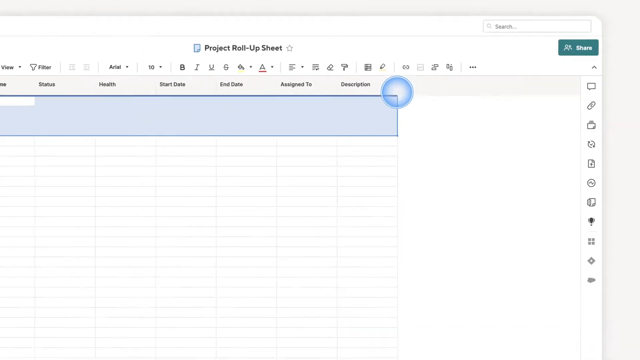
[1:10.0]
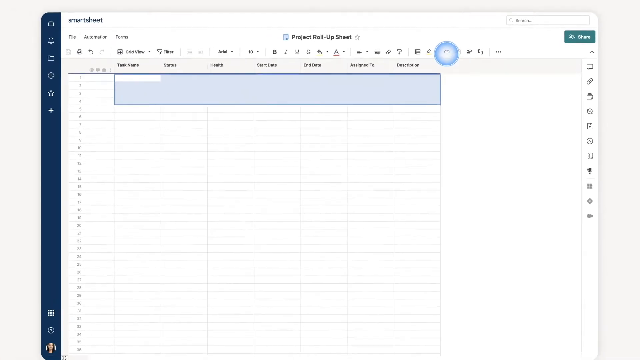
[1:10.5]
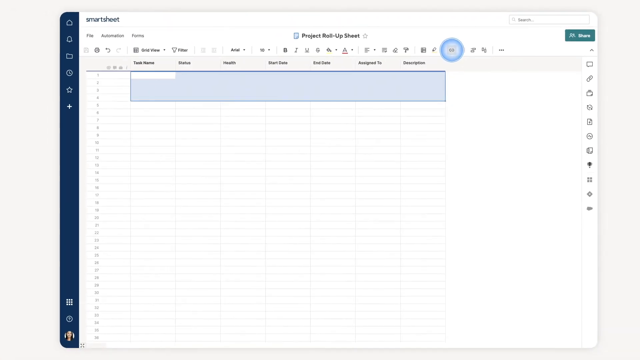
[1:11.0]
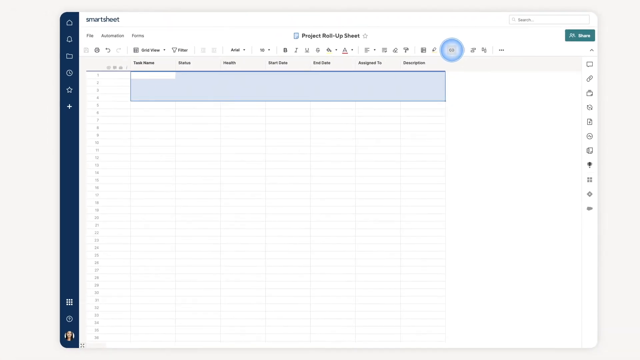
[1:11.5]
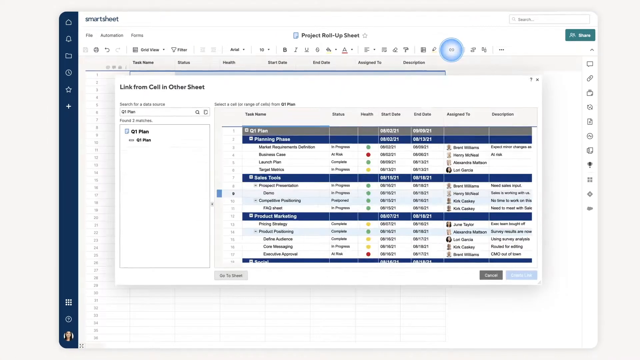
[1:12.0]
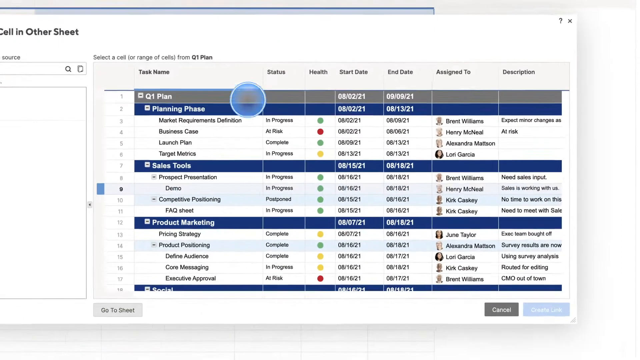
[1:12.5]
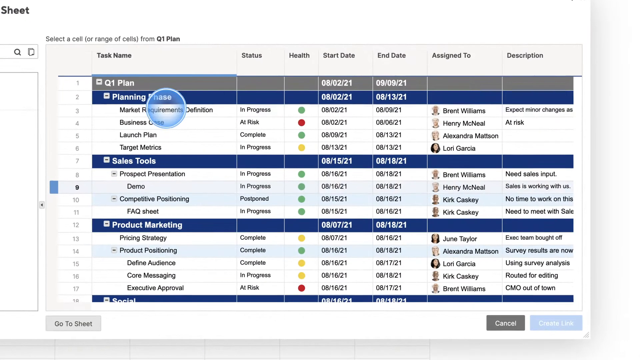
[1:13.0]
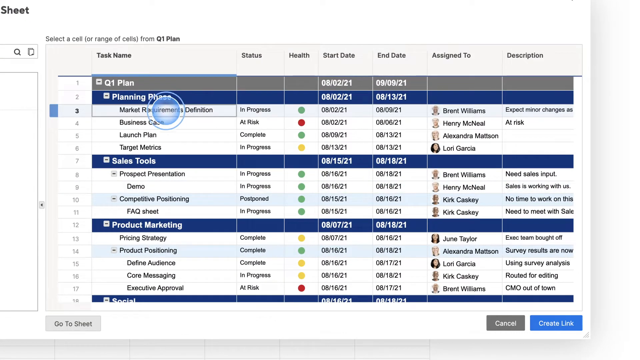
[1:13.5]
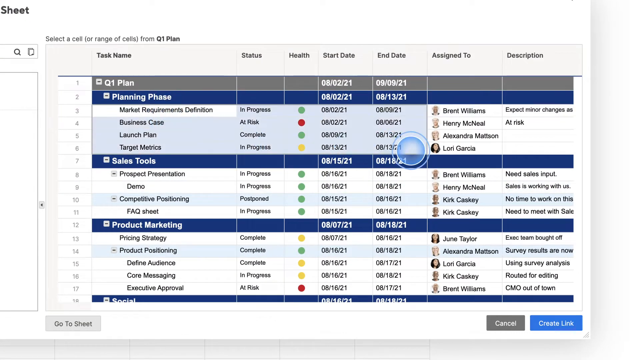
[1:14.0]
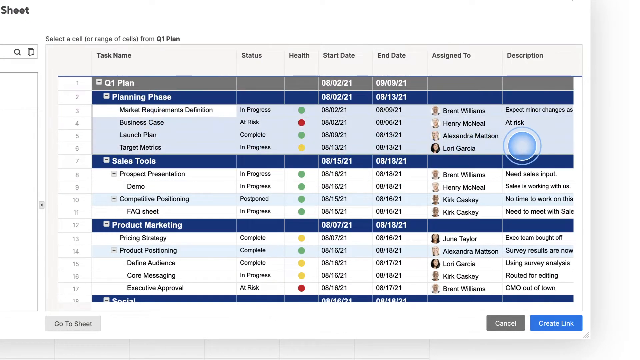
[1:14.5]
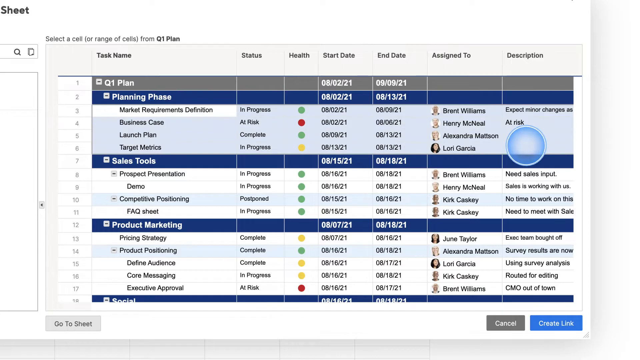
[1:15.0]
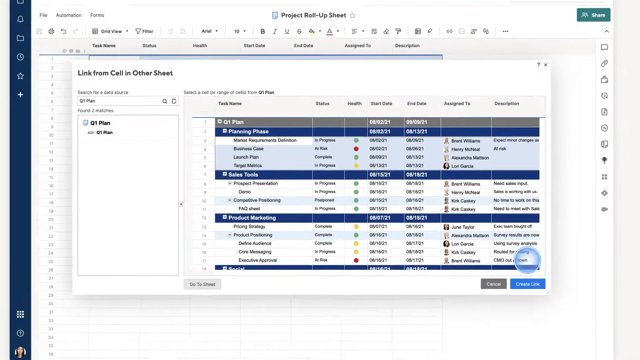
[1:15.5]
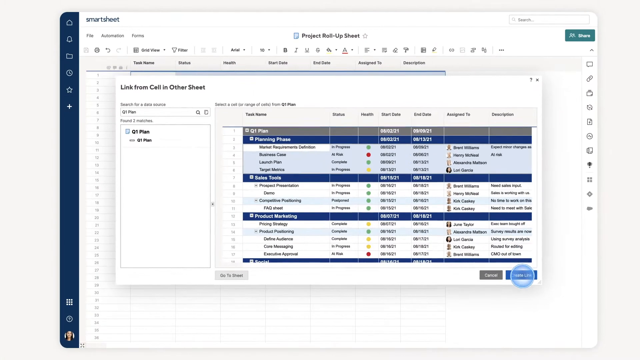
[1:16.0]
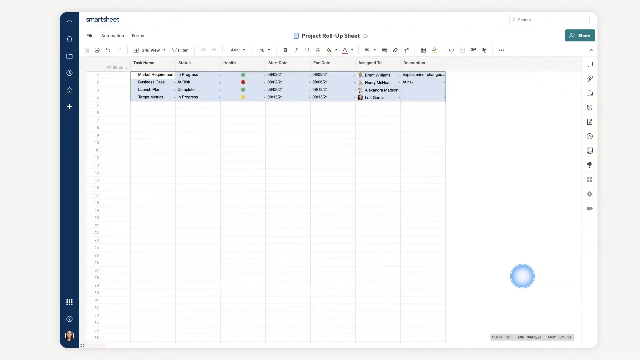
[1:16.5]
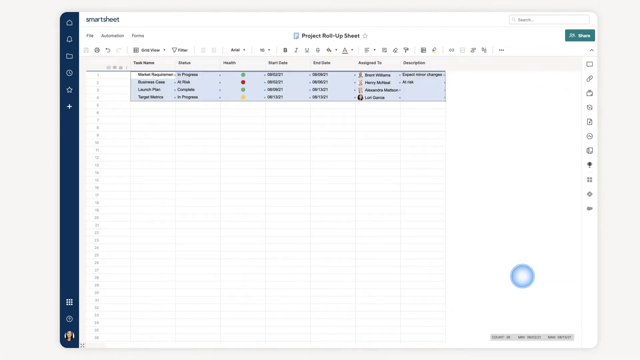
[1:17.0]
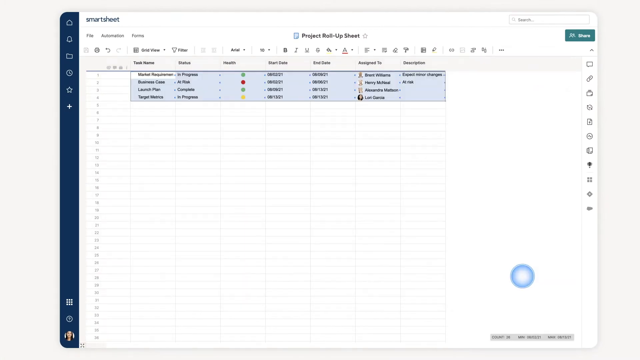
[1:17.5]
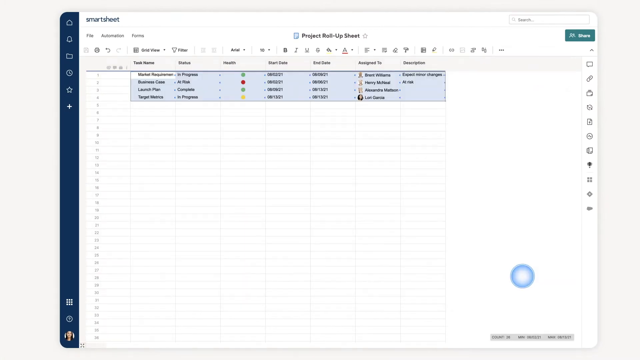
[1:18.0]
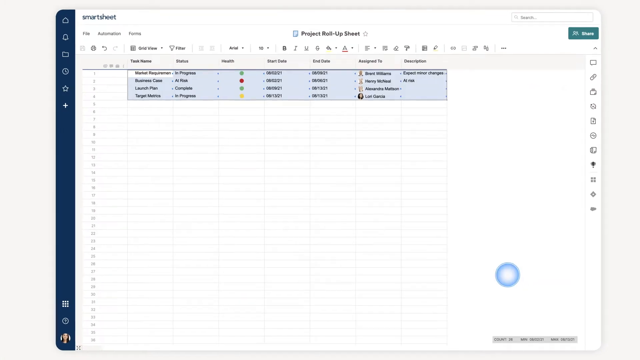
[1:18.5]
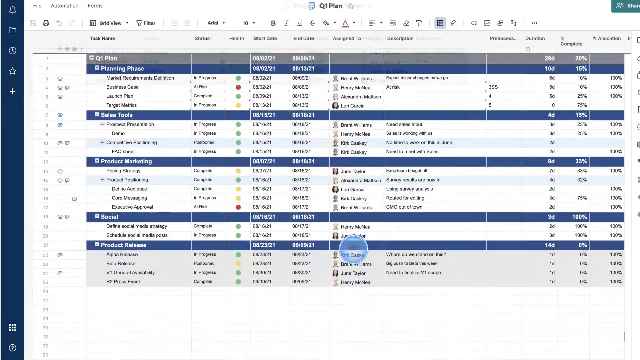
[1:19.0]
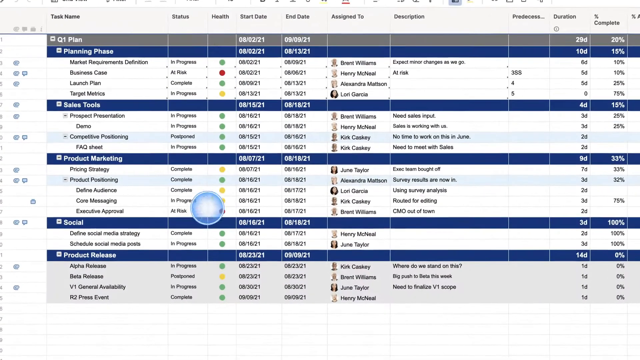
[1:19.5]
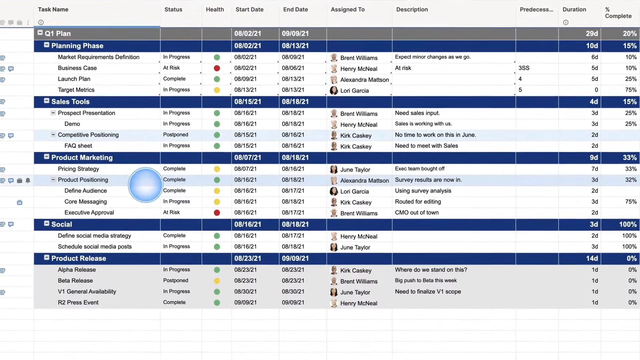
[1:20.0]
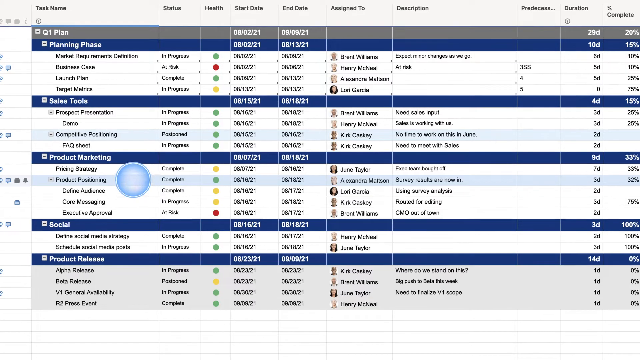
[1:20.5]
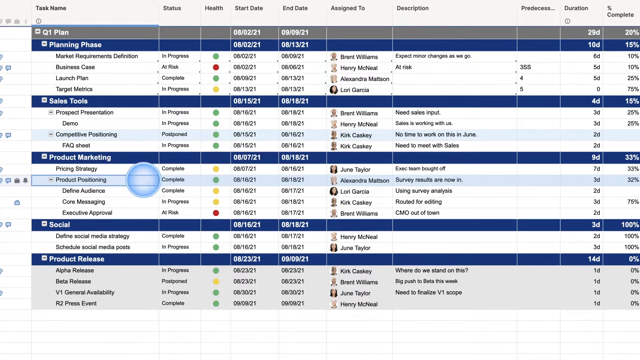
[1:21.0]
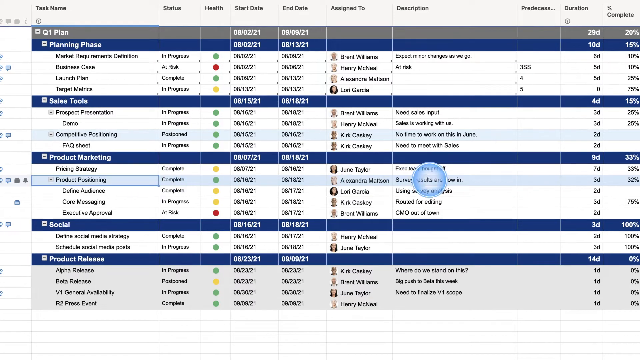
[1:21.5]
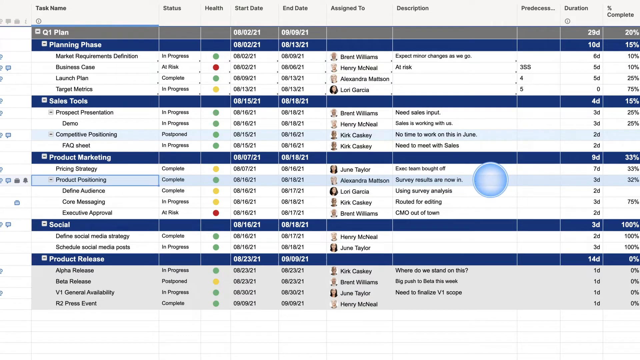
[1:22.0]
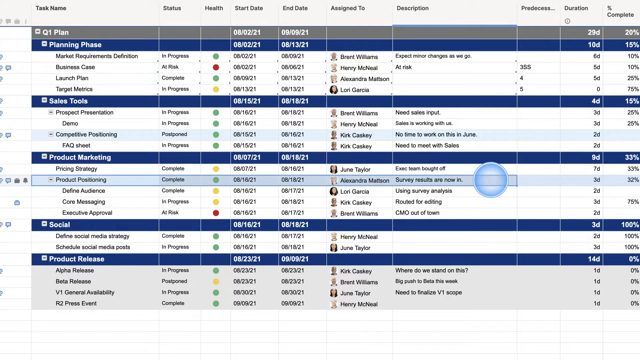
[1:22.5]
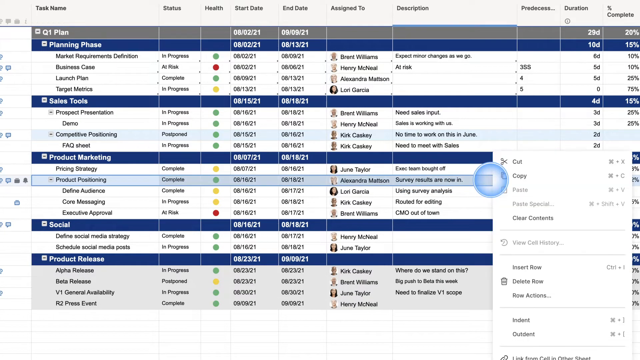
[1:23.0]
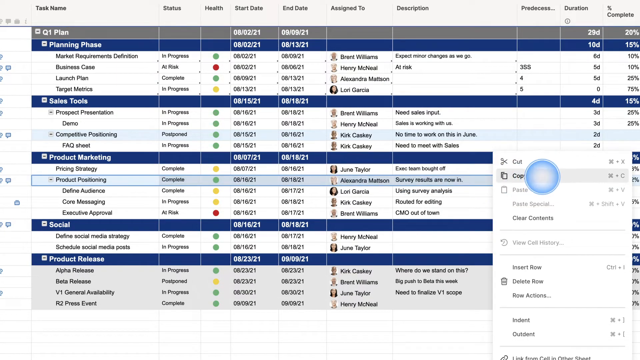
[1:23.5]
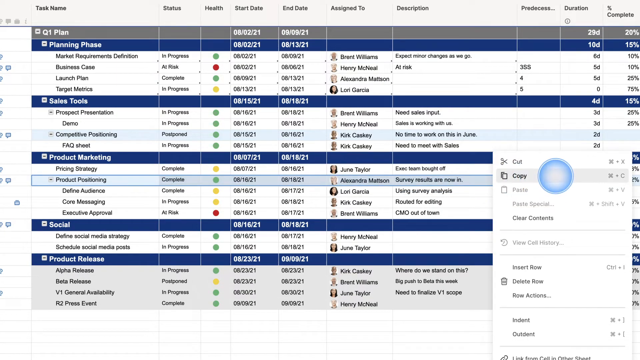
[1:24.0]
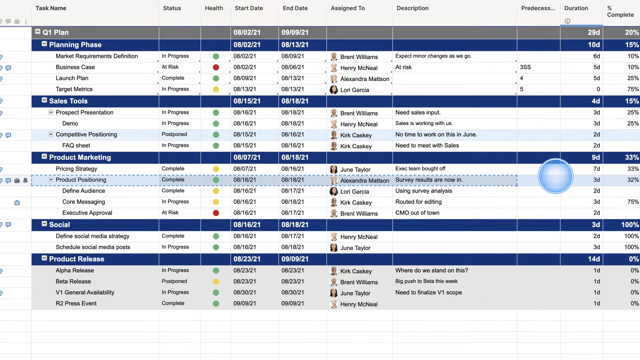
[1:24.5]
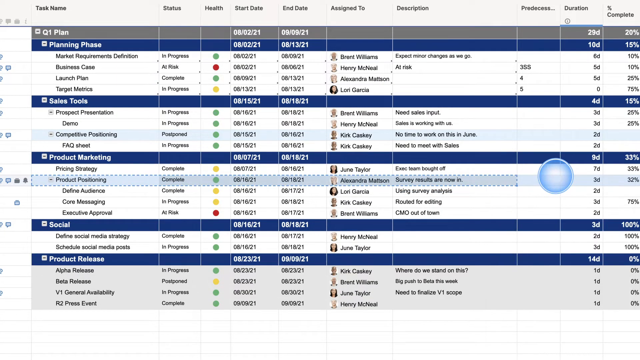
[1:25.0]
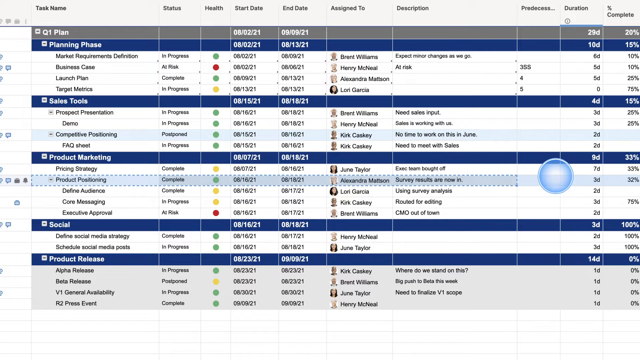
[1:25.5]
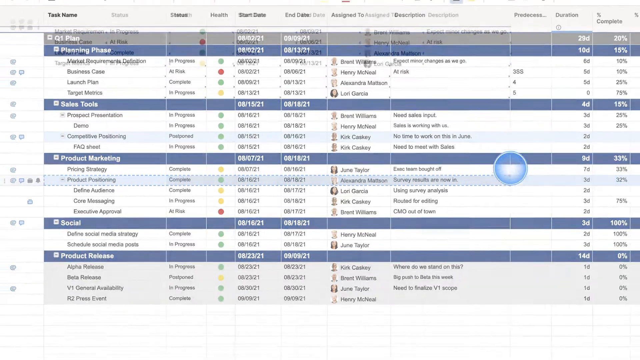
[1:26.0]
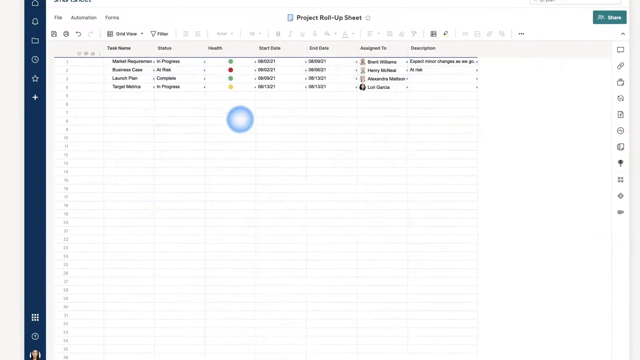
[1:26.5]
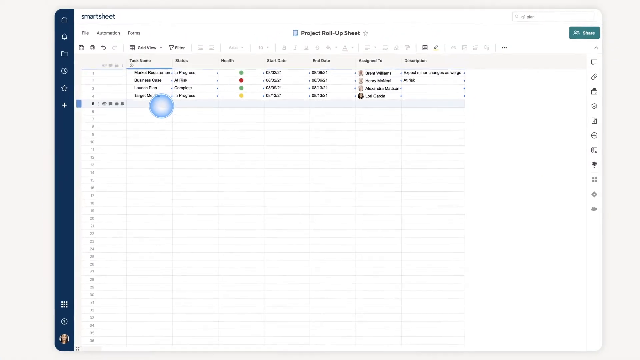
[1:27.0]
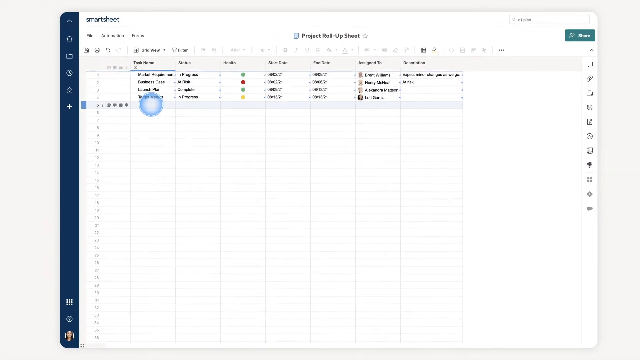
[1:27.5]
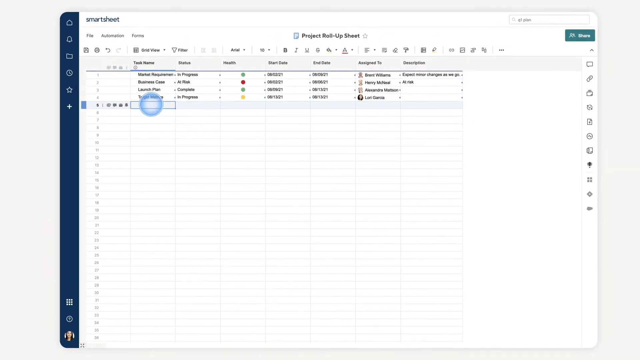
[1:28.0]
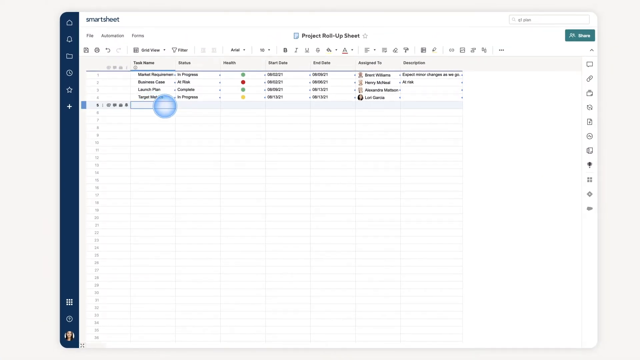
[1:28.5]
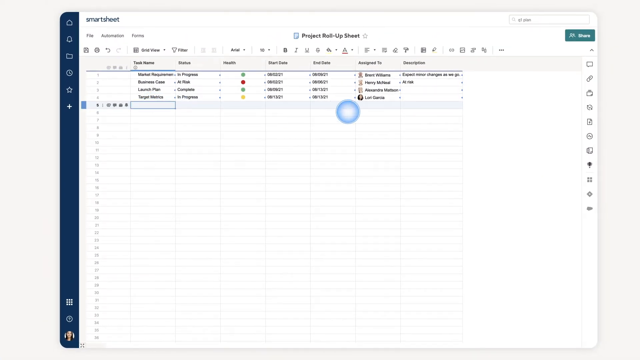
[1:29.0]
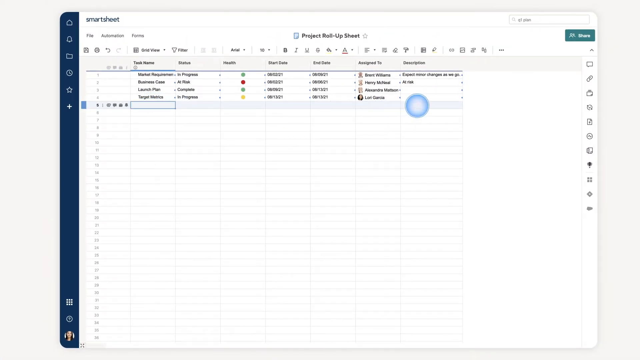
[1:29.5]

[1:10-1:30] One of the sheets is pulled up and seen more clearly. Under the planning phase, market requirement definition is in progress, business case is at risk, launch plan is complete and target metrics are in progress. Under sales tool are prospect presentation, demo, competitive positioning and FAQ sheet, in progress, with competitive positioning postponed. Under product marketing, price strategy is complete, product positioning complete, define audience complete, core messaging in progress and executive approval at risk. The view zooms out to a small screen and zooms back in. There is also a section that says social: define social media strategy is complete and schedule social media posts is in progress. Under product release, alpha release is in progress, beta release postponed and general availability in progress.